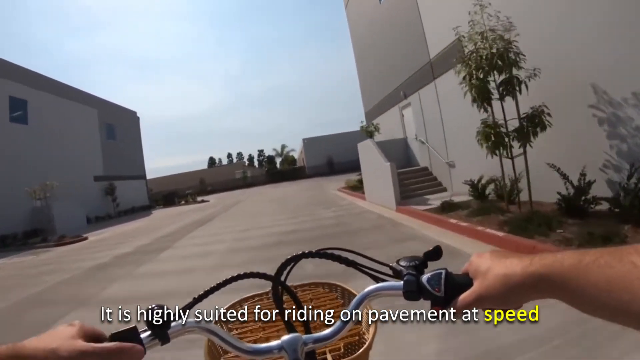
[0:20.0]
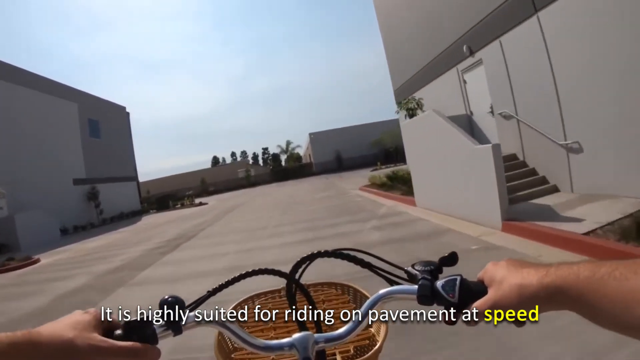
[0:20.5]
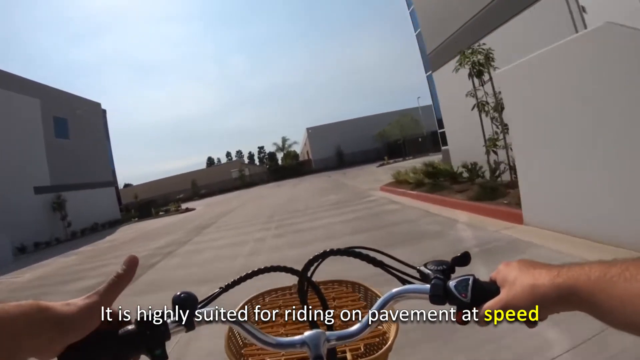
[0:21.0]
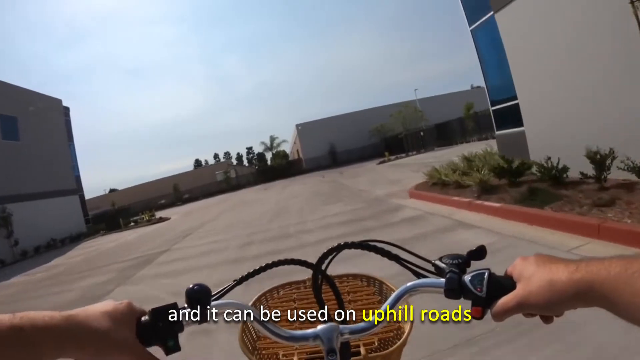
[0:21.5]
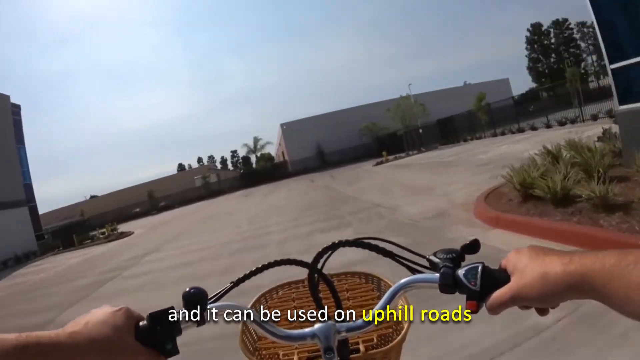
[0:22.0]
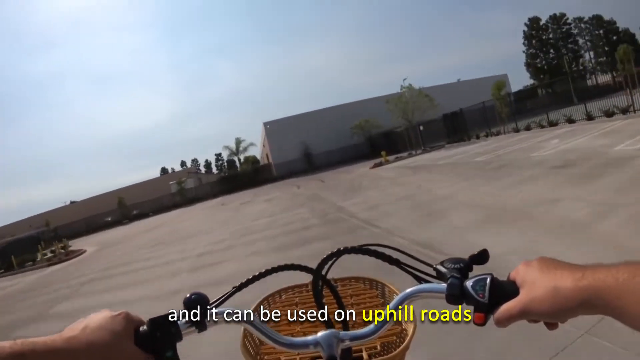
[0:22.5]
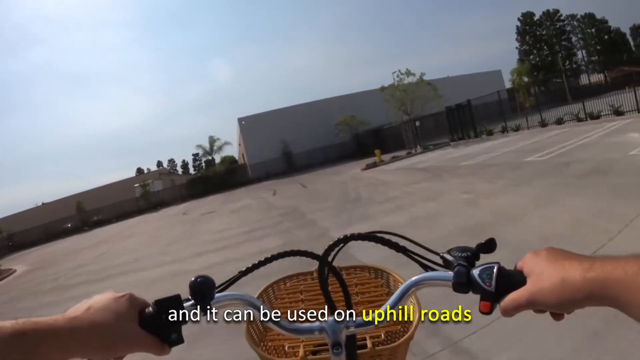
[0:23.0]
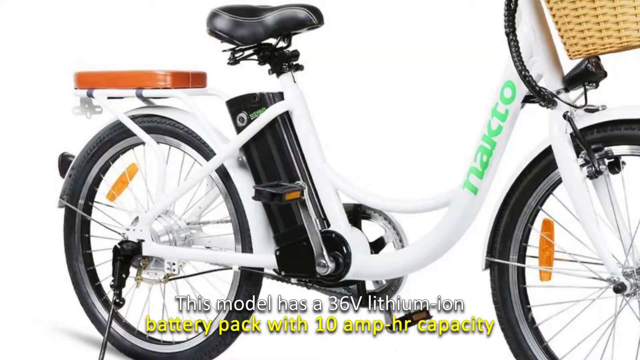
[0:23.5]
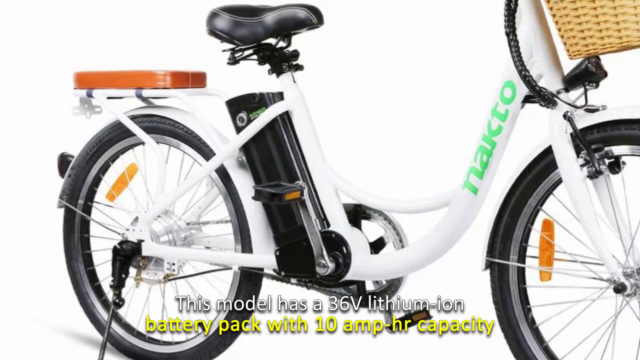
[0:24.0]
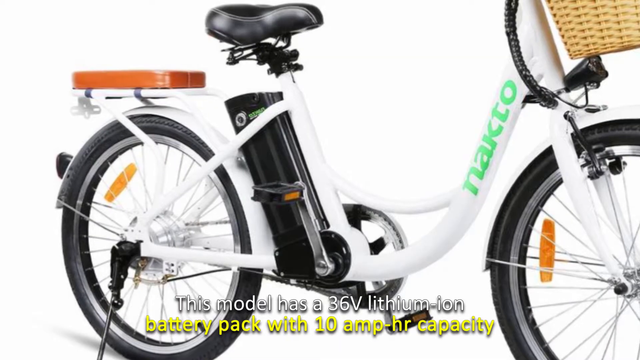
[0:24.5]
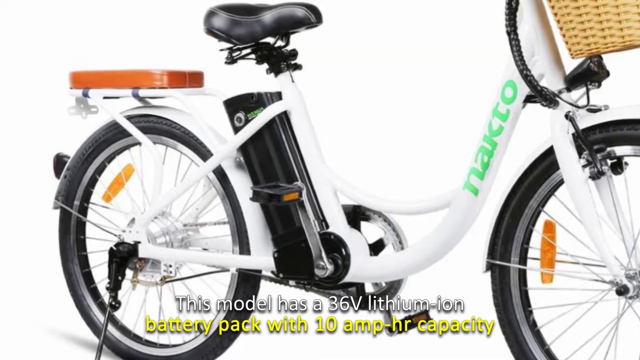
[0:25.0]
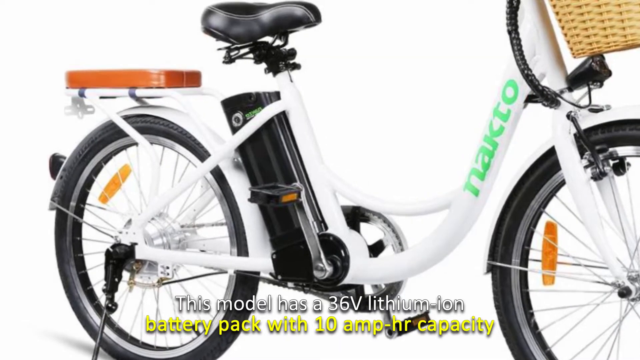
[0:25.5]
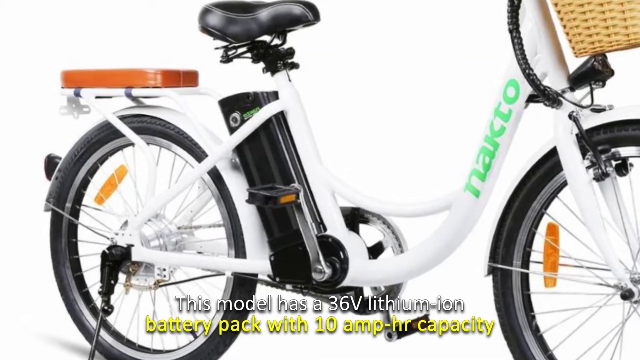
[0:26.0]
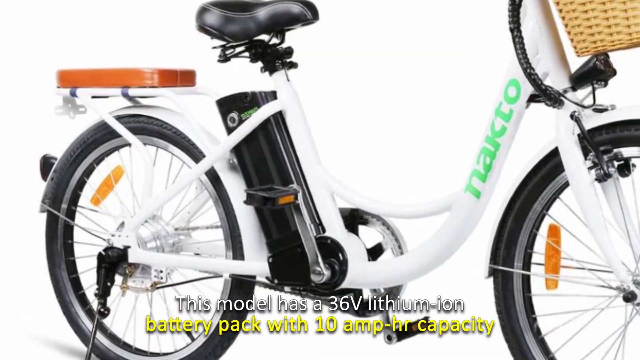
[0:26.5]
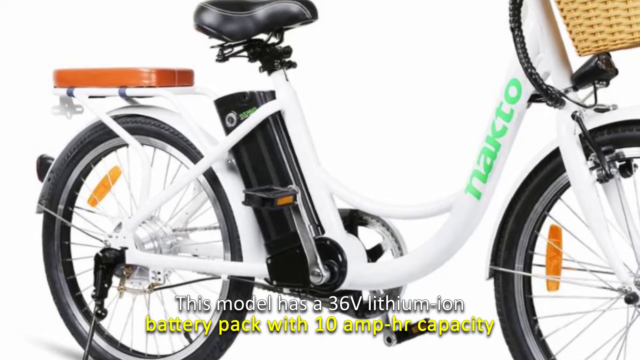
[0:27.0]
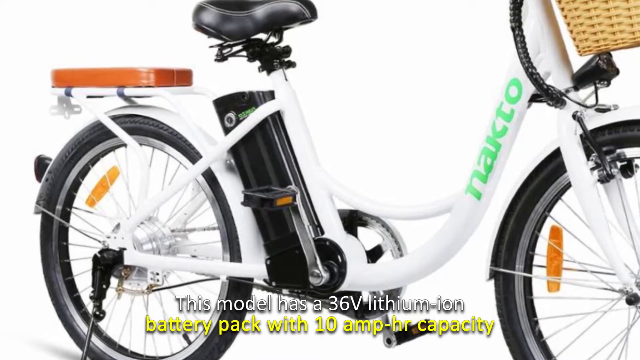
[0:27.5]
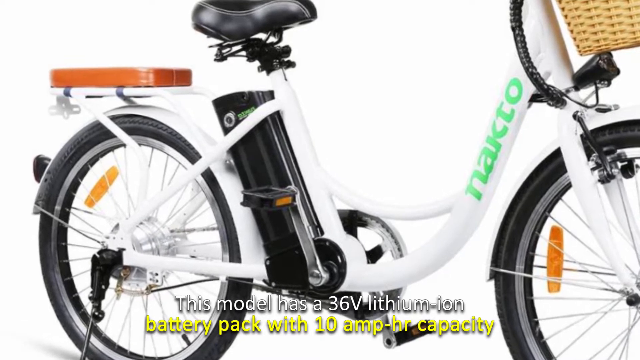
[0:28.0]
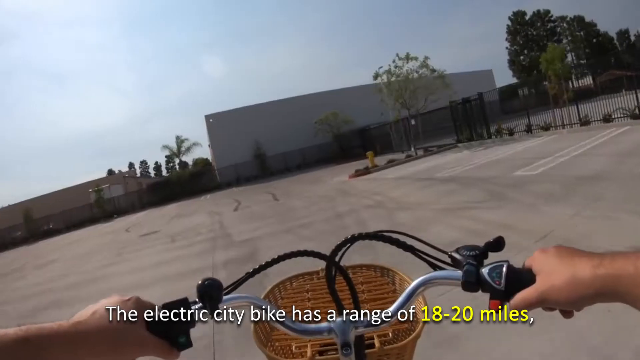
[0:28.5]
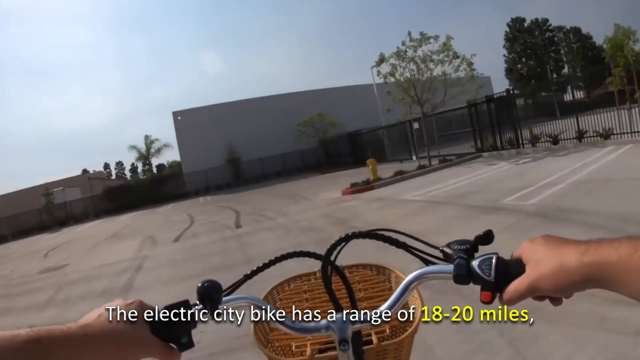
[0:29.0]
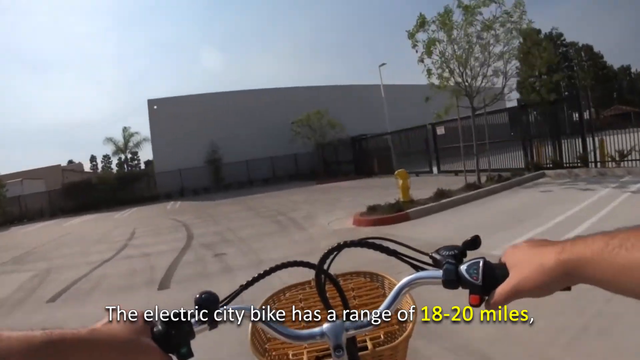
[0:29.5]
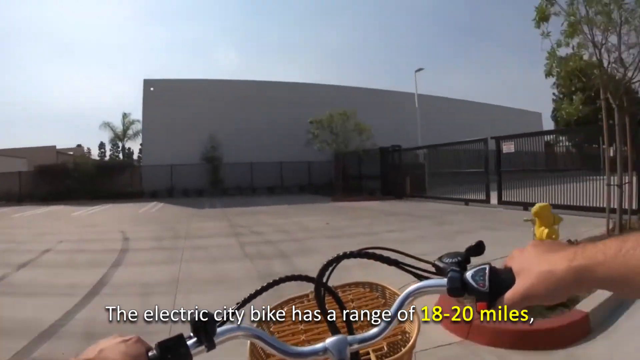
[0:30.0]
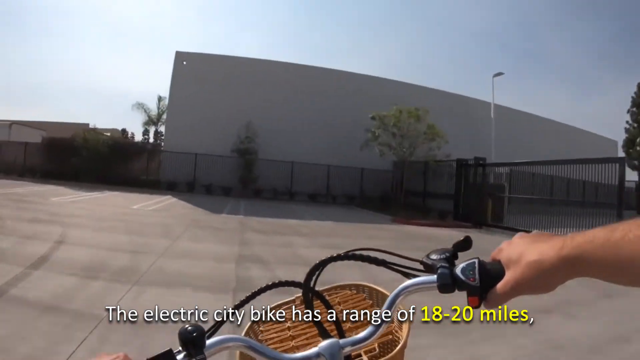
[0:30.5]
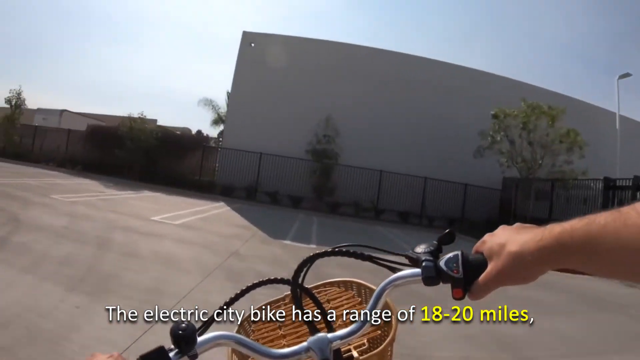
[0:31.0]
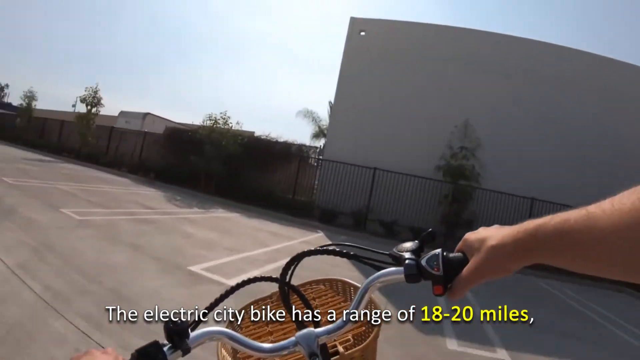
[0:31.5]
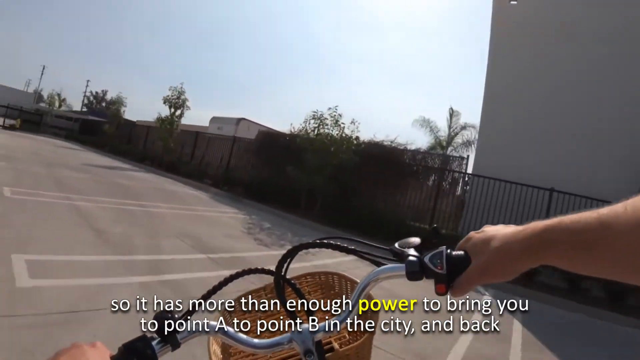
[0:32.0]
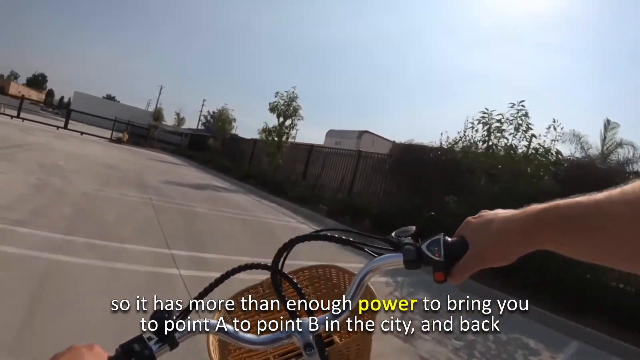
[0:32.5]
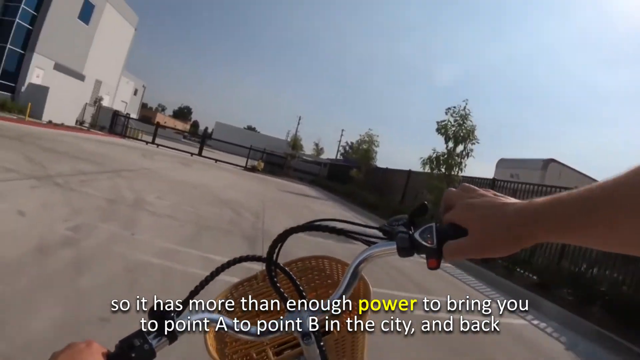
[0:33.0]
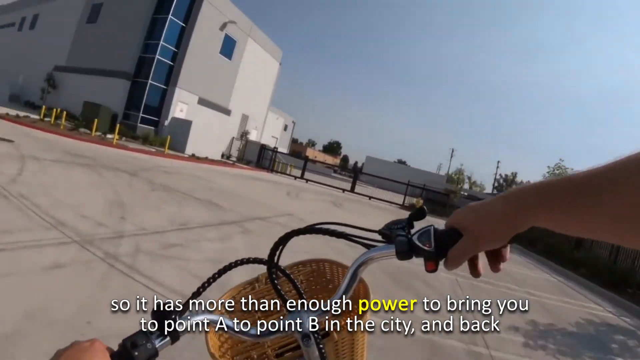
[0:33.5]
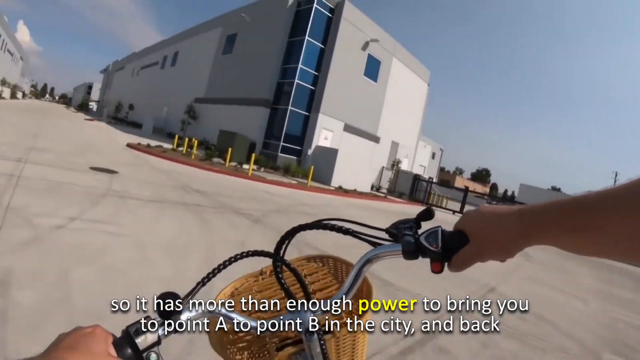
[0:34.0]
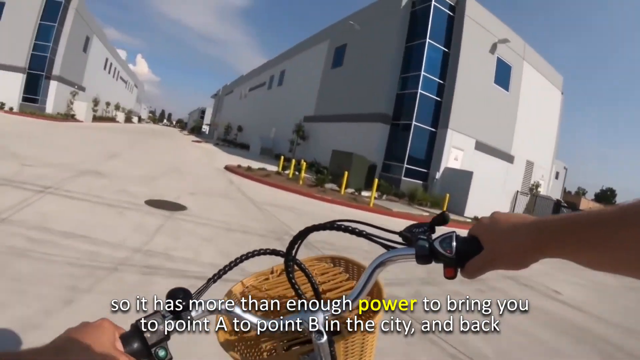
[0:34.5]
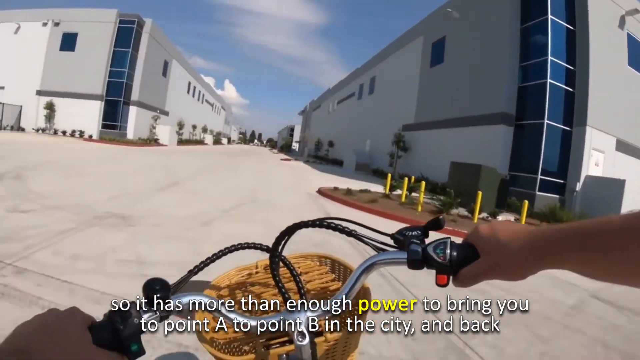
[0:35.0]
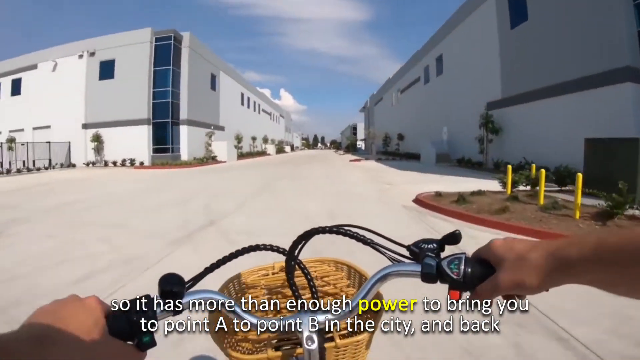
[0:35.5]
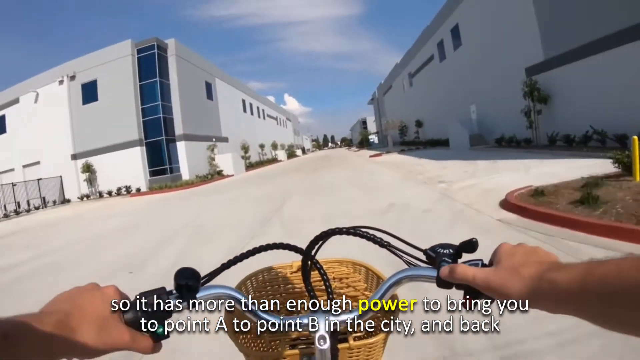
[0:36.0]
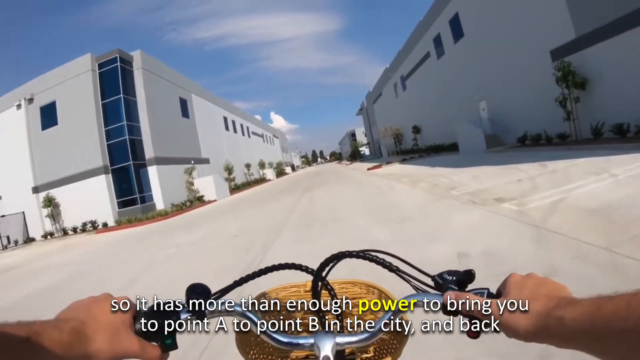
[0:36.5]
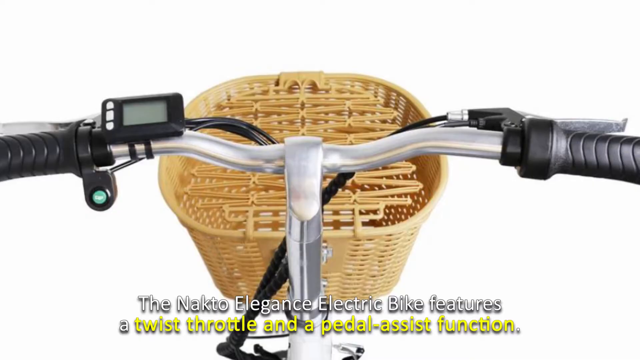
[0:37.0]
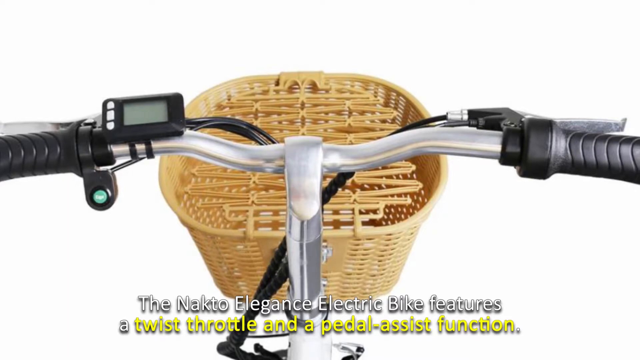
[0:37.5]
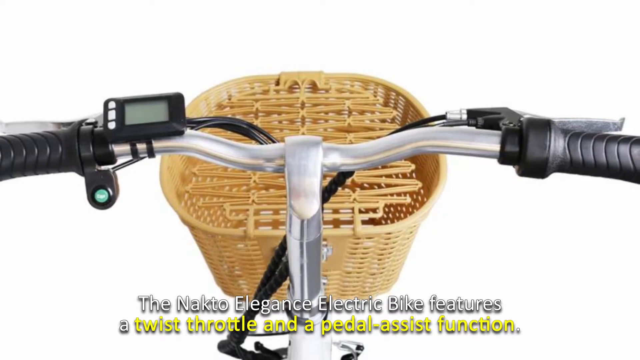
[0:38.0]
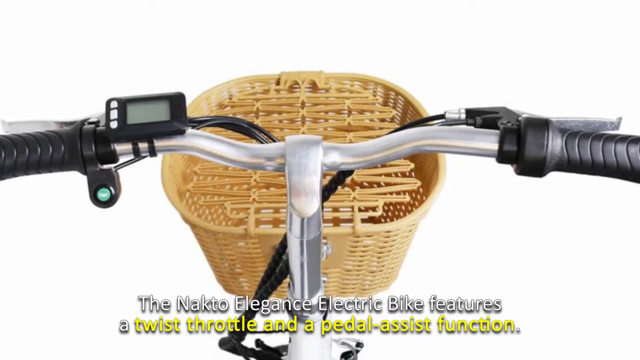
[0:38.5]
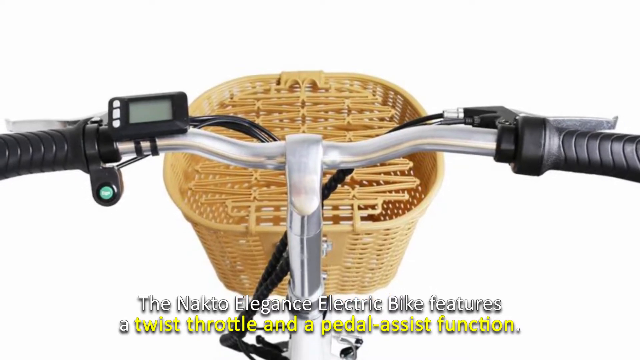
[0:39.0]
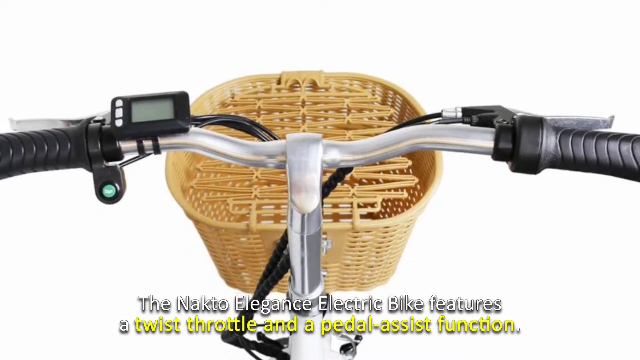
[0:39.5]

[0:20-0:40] The subtitles continue: the bike is suited for riding on pavement at speeds of 18 to 20 miles, has enough power to get from point A to point B in the city and back, features a twist throttle and pedal assistance, and has a 36V lithium-ion battery pack with a lot of power. The cyclist grips the handles of the bike, which has a basket in front, and rides around the road past various buildings. On the right-hand side there is a green tree or plant.